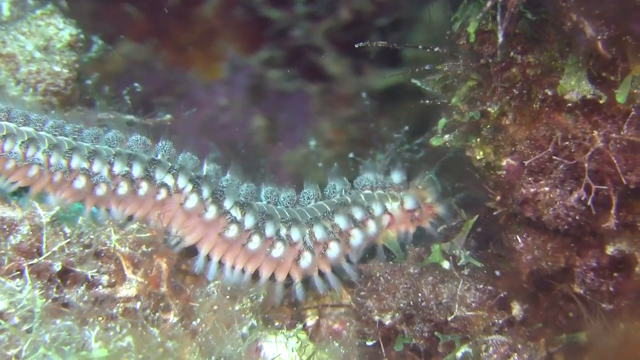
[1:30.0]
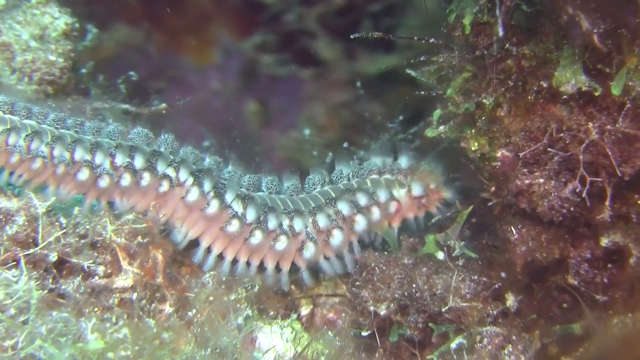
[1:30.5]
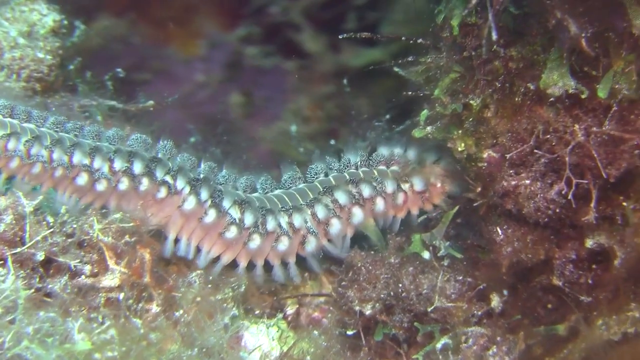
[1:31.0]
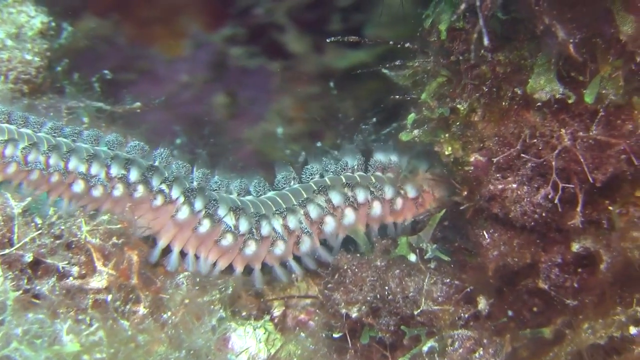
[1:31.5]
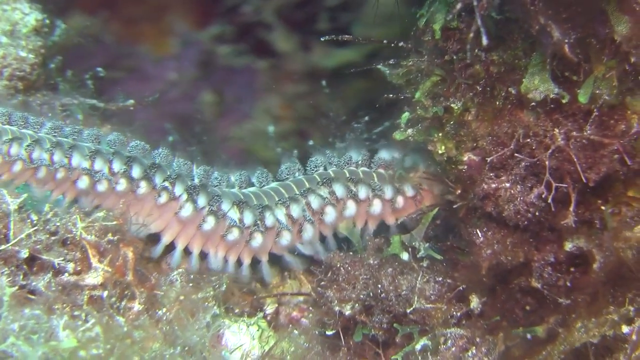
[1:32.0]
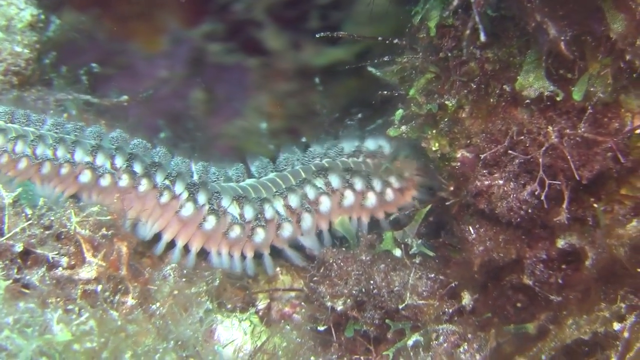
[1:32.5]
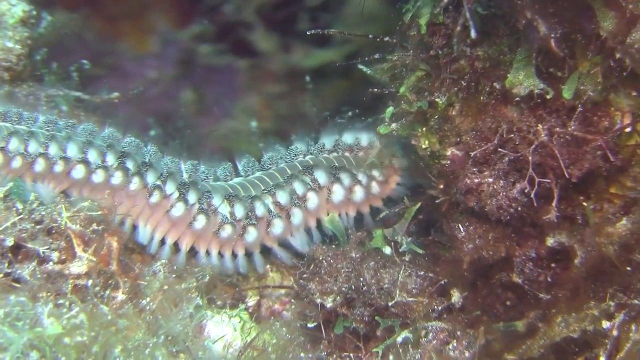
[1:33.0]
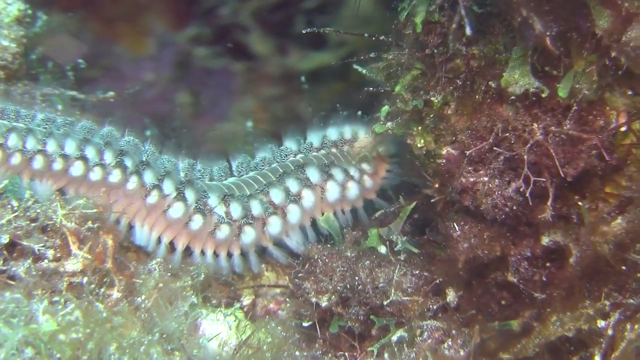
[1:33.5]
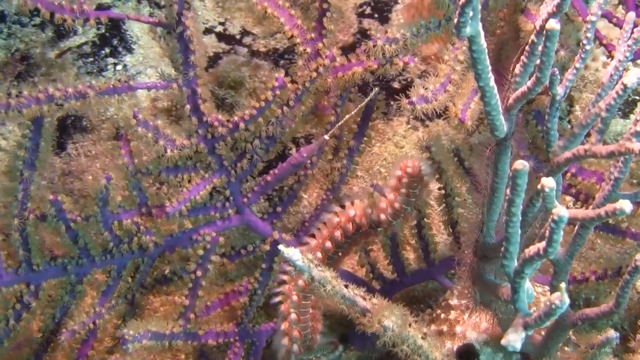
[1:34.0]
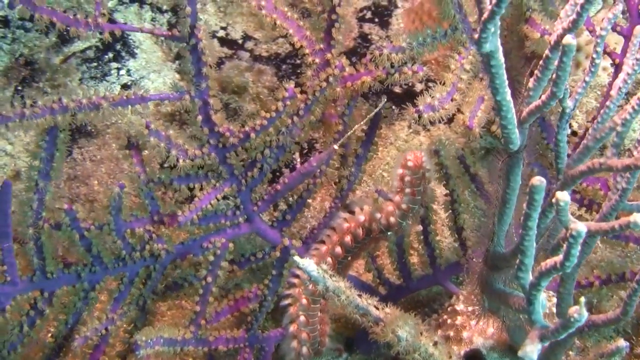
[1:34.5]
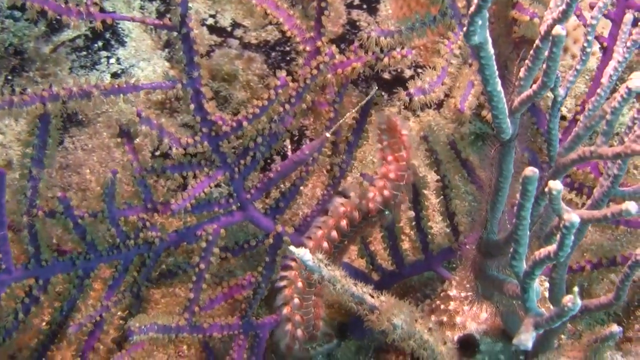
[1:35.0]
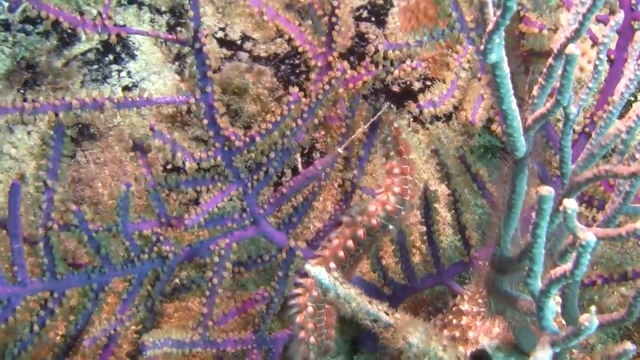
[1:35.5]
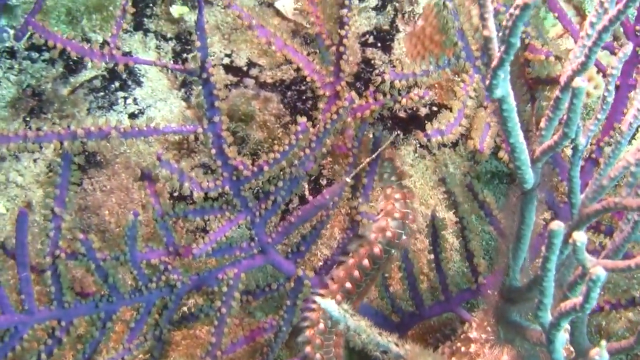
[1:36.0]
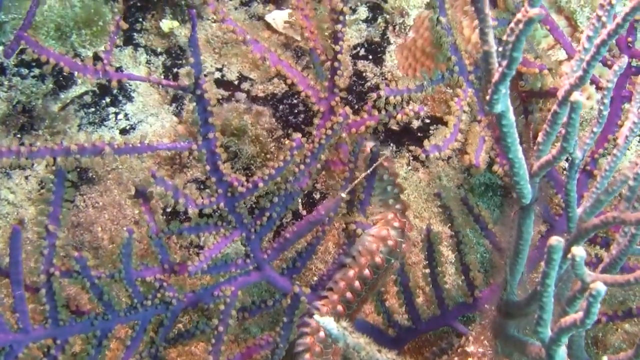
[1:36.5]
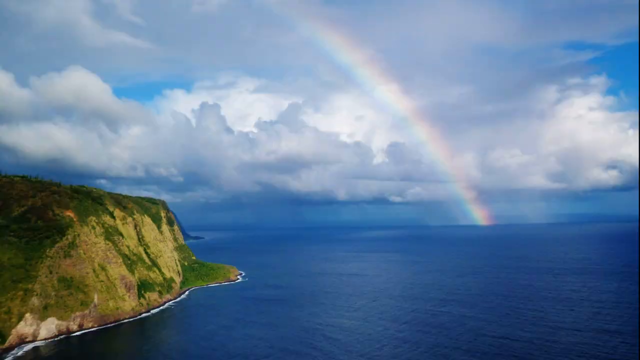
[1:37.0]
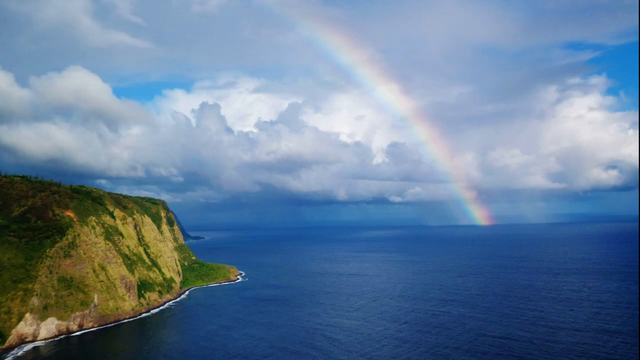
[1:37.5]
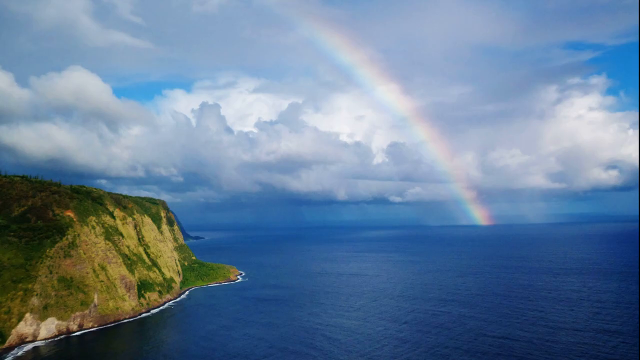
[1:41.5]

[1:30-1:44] The centipede-like creature moves around, crawling from right to left. It appears to shove its face into a wall of coral and then pull its head back, as if it doesn't like it. It cuts to another overhead shot, similar to earlier, showing what looks like a pinkish centipede creature crawling through colorful purple-blue coral. The video then cuts to an outside view above ground: a rainbow is in the background, sticking out of the water, with a green cliff on the left side, a lot of ocean on the right side, and many white clouds in the background. The camera lingers here for several seconds.